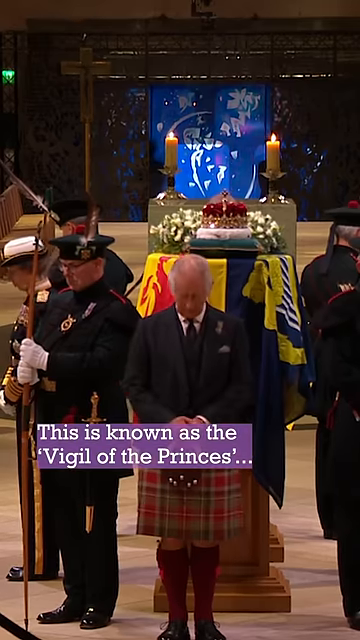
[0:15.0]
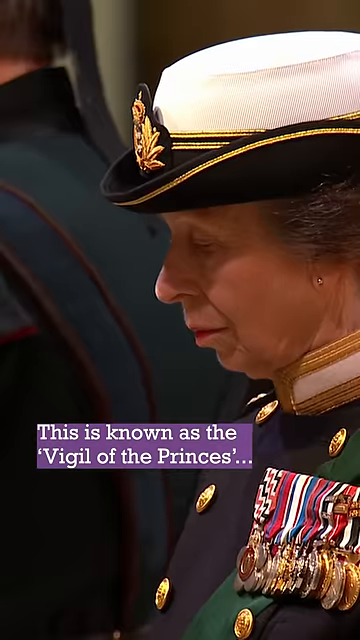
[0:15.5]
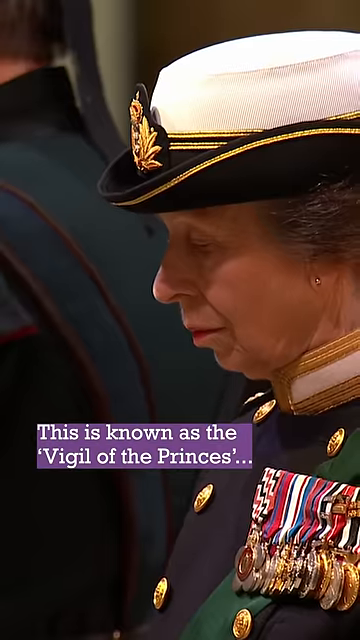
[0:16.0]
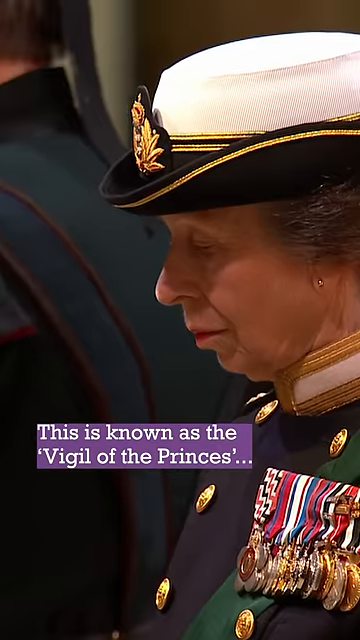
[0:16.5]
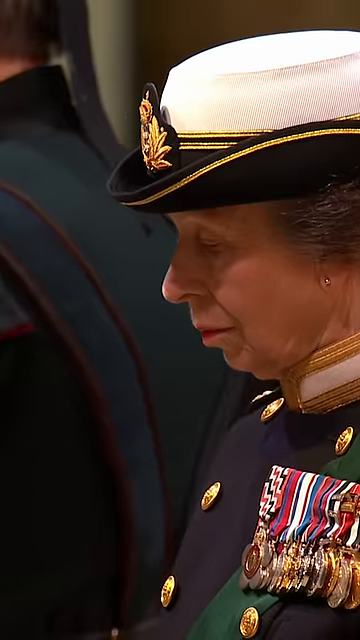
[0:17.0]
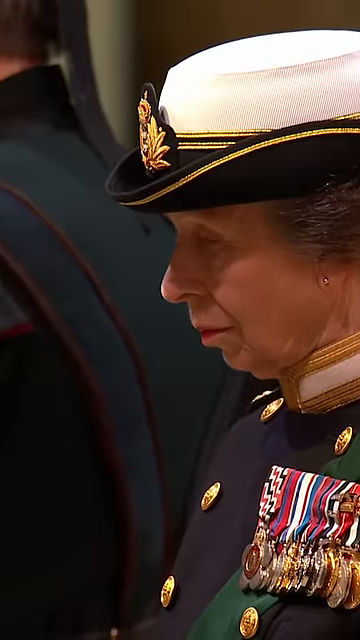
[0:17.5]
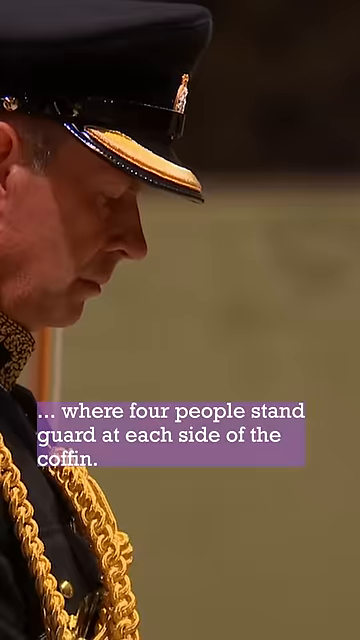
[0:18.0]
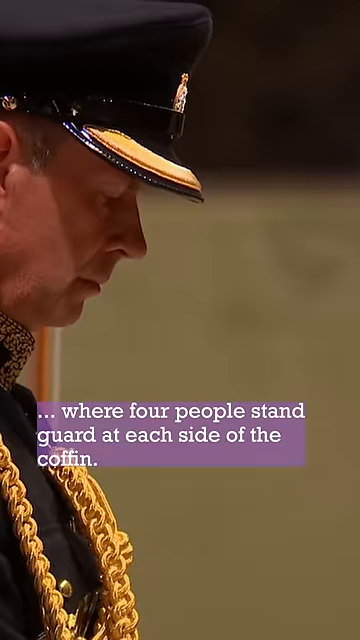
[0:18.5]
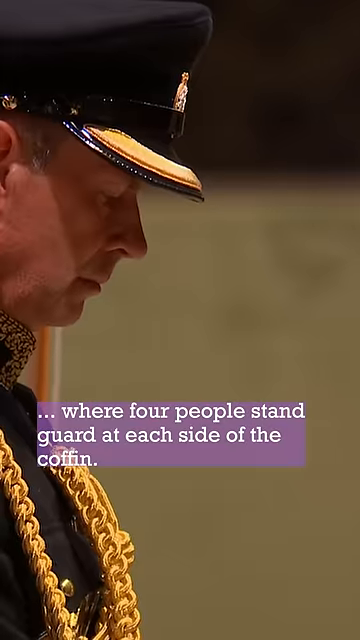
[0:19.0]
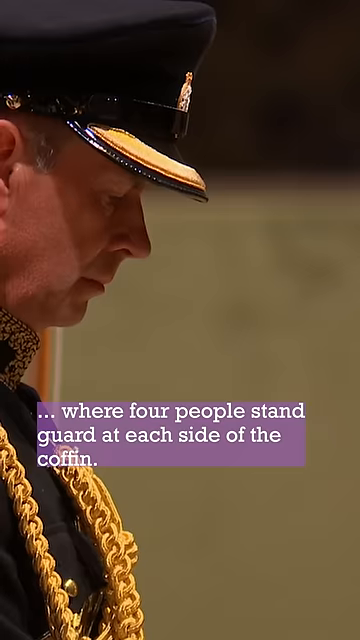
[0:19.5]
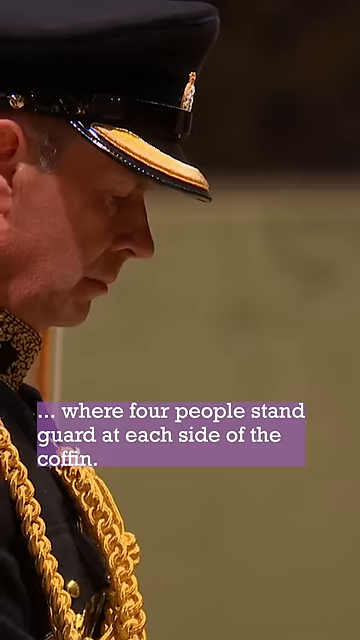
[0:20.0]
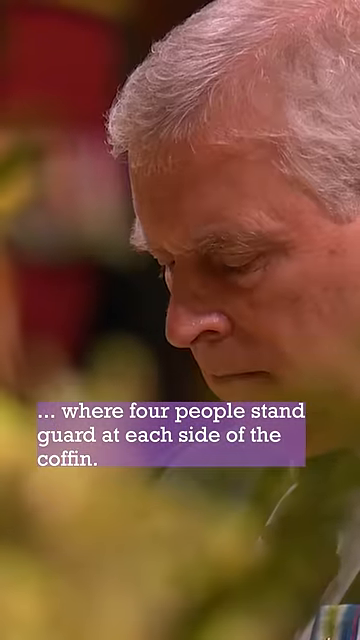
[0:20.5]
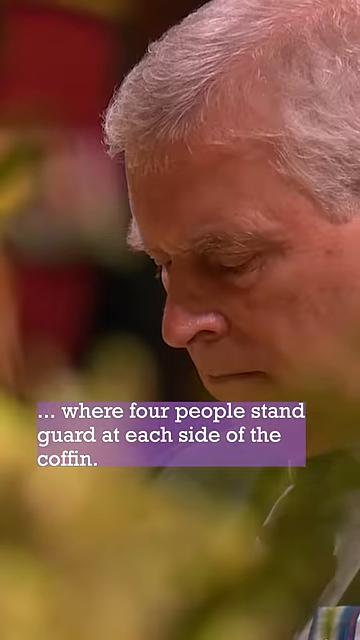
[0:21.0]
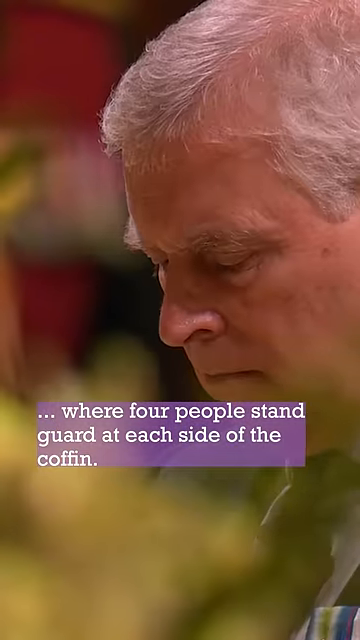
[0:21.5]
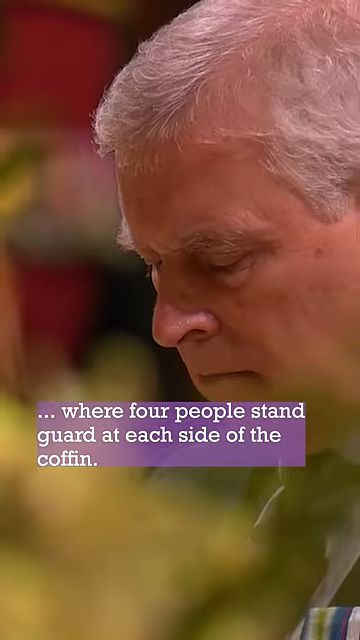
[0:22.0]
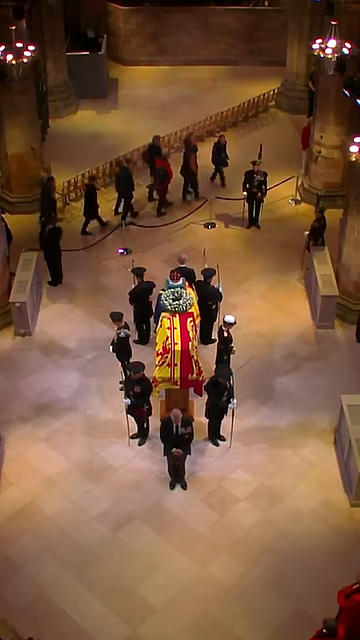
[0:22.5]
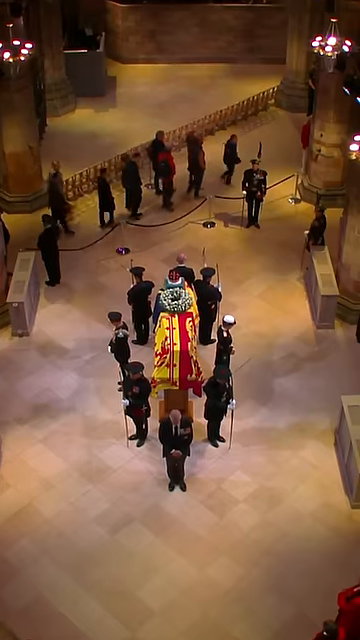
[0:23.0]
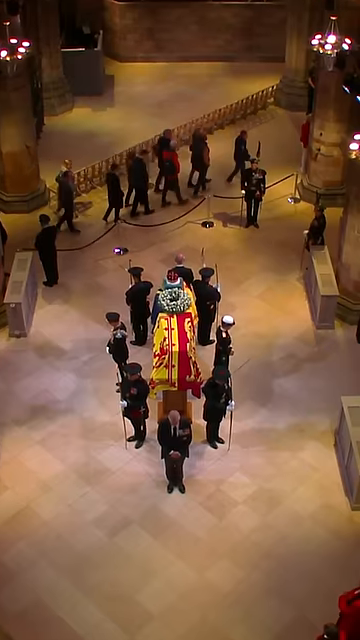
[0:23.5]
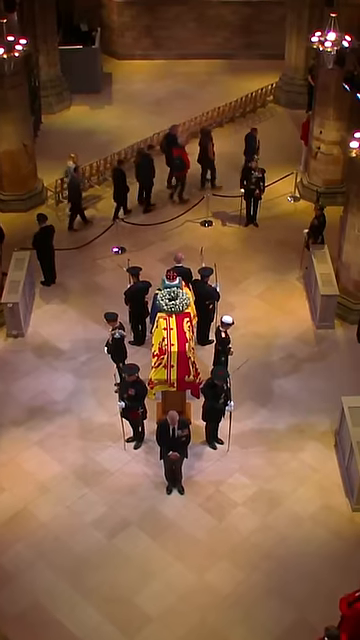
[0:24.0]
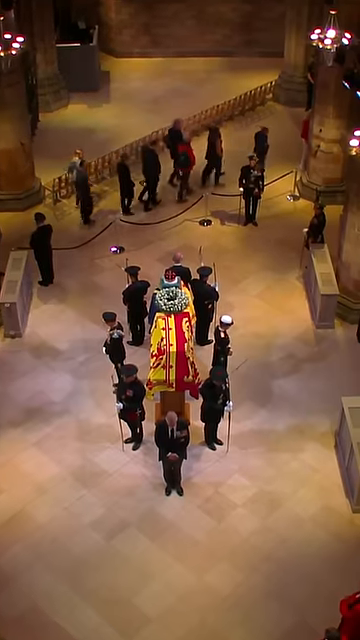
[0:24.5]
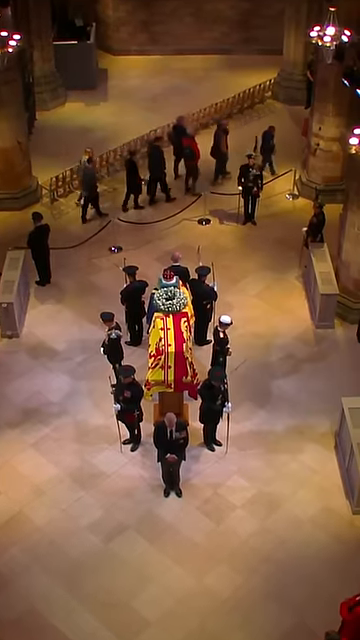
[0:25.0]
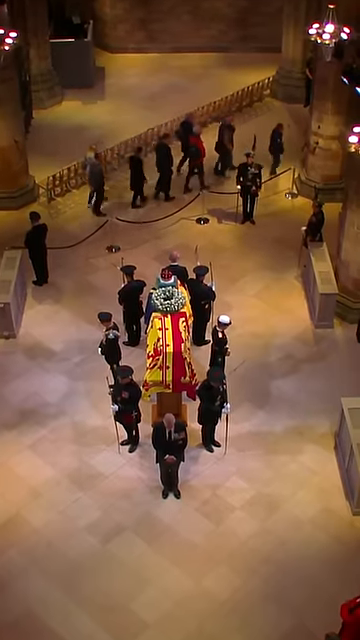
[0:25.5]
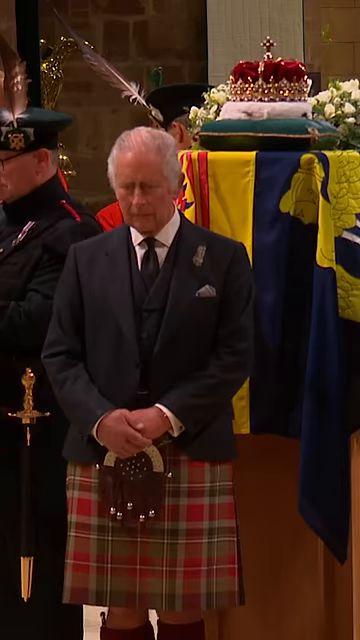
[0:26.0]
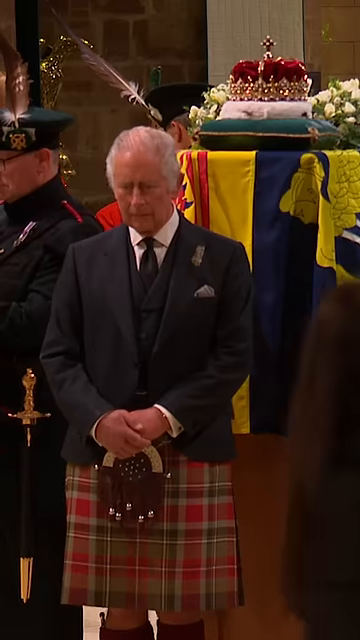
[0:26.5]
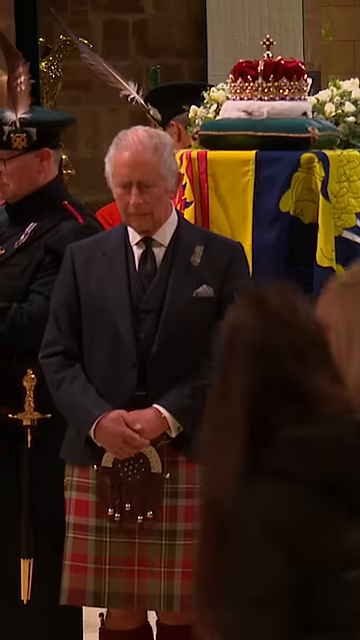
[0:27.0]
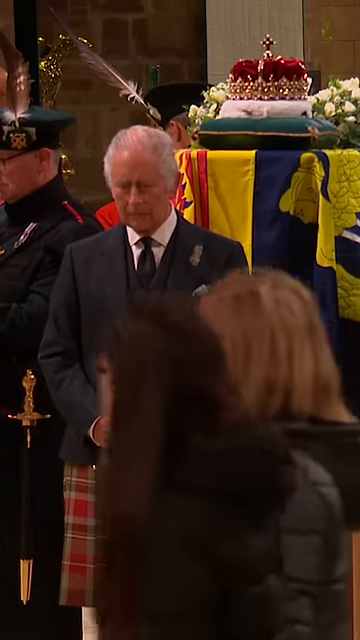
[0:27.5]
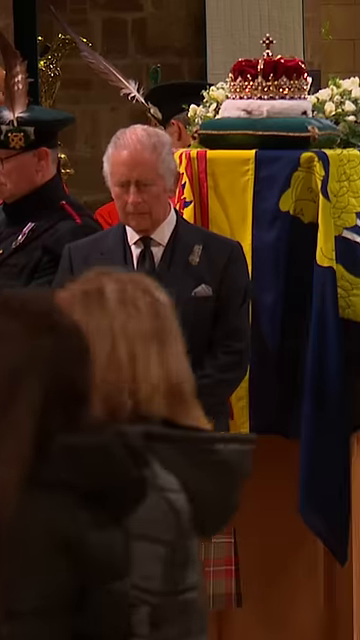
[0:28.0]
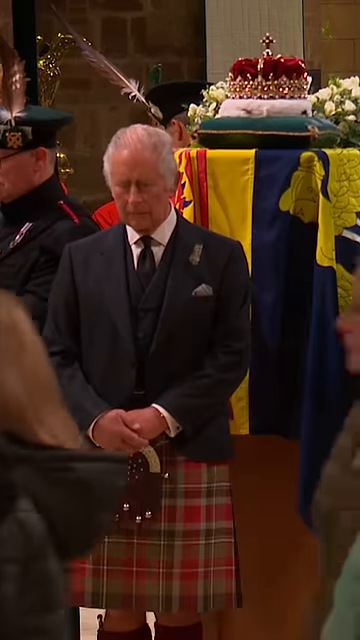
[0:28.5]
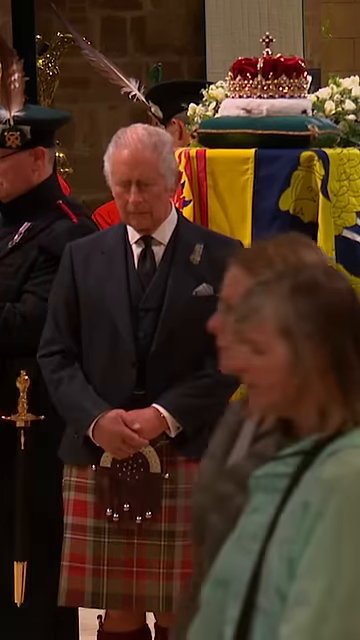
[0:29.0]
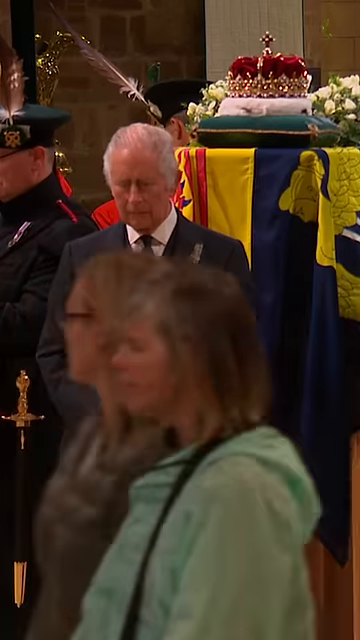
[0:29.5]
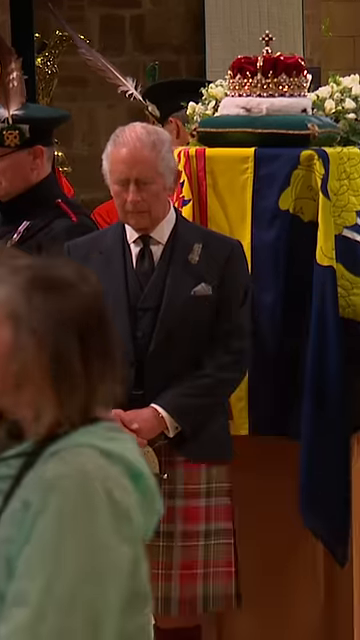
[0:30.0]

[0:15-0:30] A woman in a white hat and full uniform looks at the ground with a solemn expression. A man in a similar uniform also looks solemnly at the ground, followed by a man with white hair who has his eyes closed and the same expression. The camera pans out to show people walking by as armed guards stand by a coffin draped with a red and yellow cloth. Finally, Prince Charles, dressed in a suit, stands with his hands folded over one another, staring at the ground.